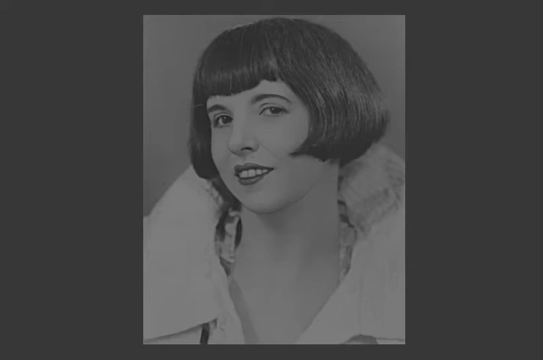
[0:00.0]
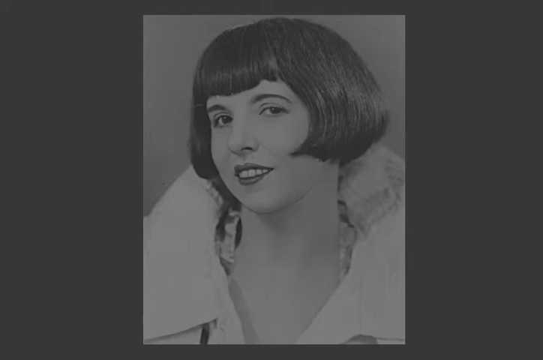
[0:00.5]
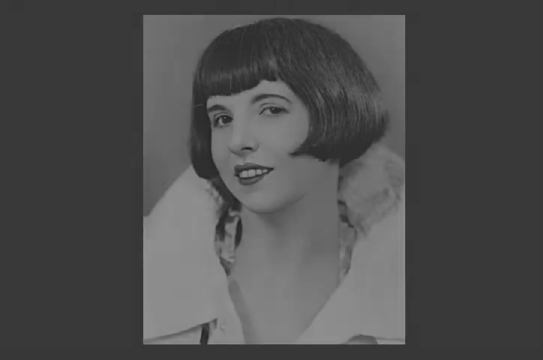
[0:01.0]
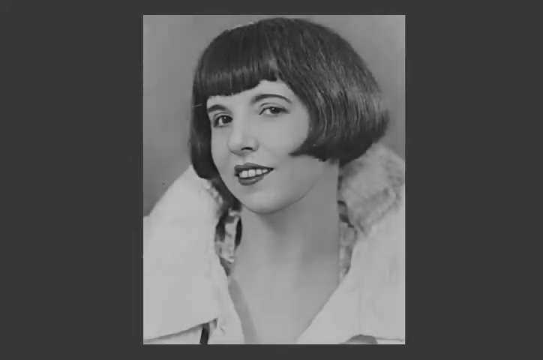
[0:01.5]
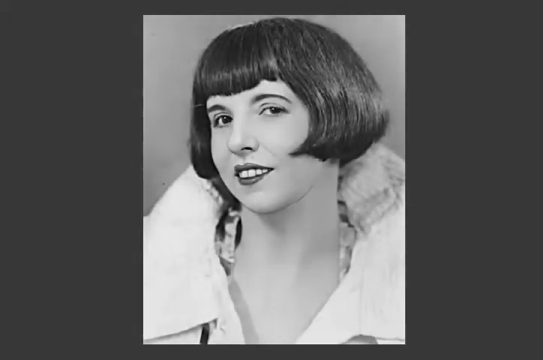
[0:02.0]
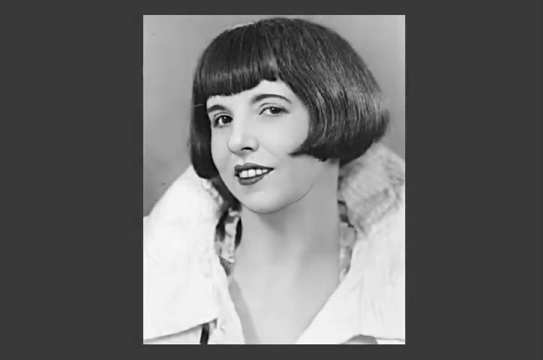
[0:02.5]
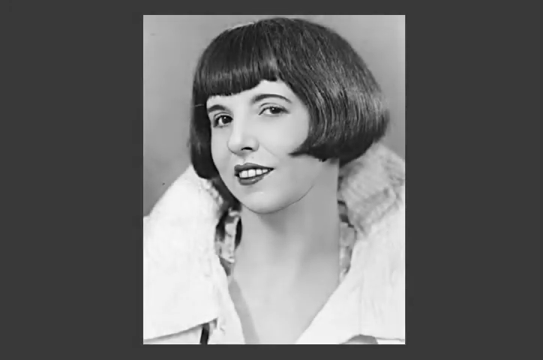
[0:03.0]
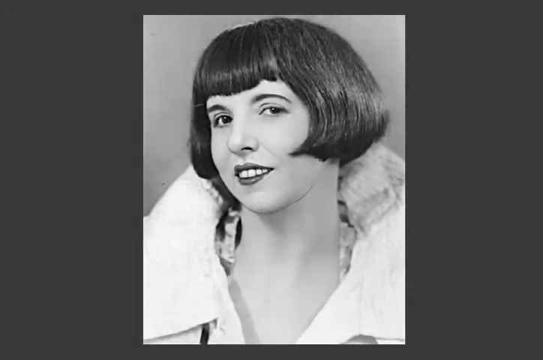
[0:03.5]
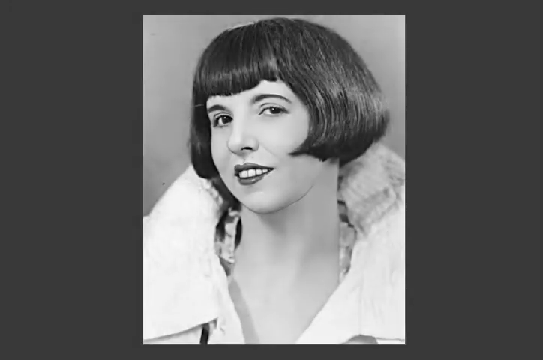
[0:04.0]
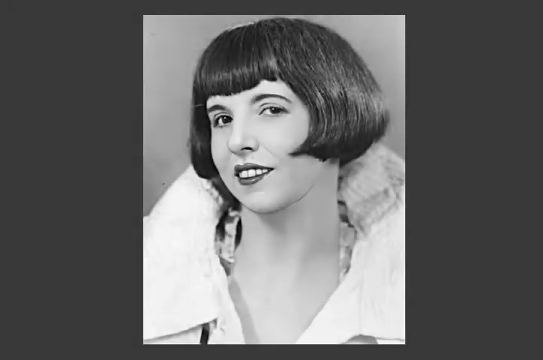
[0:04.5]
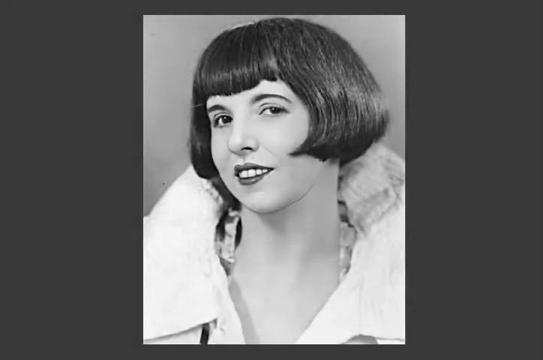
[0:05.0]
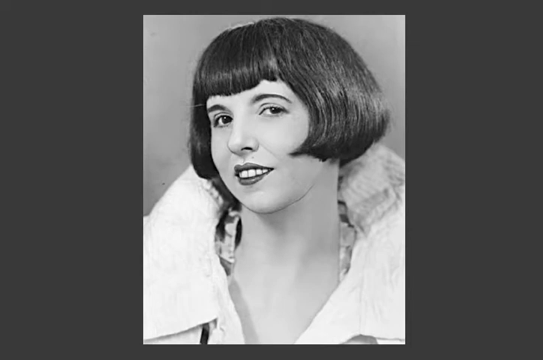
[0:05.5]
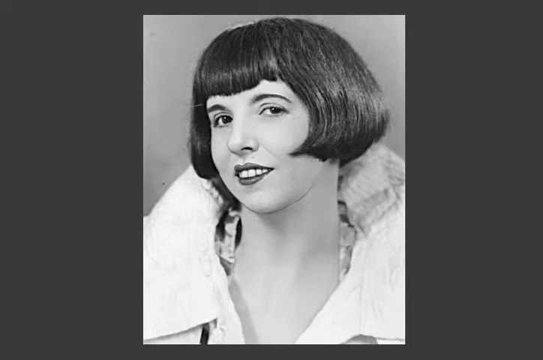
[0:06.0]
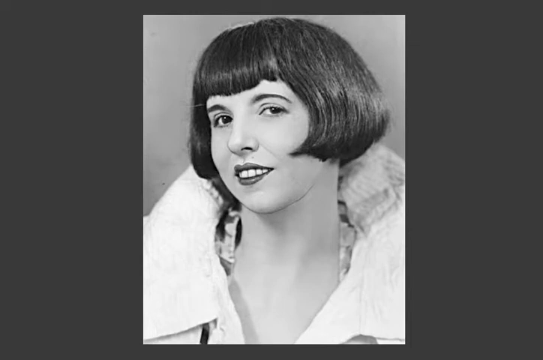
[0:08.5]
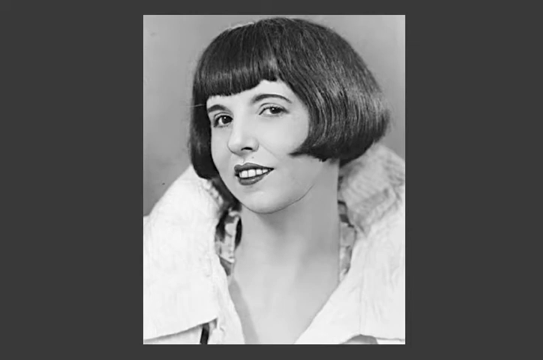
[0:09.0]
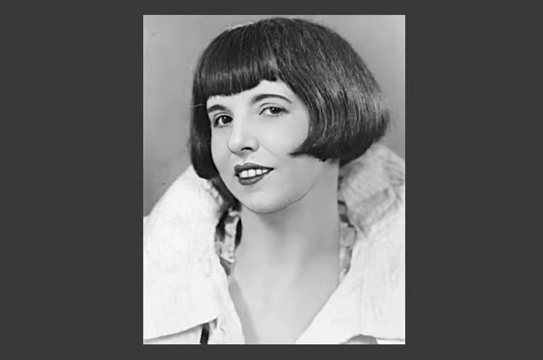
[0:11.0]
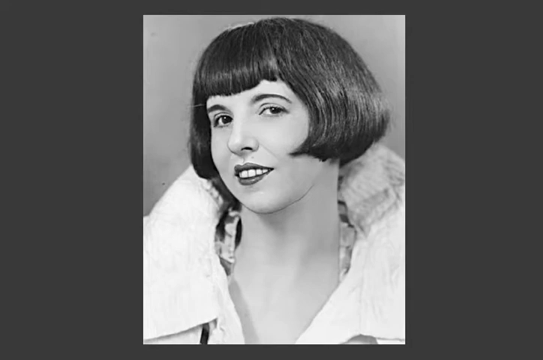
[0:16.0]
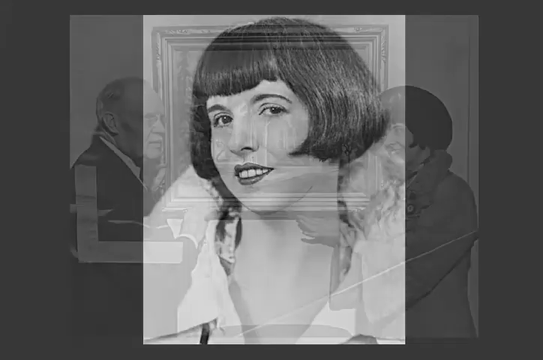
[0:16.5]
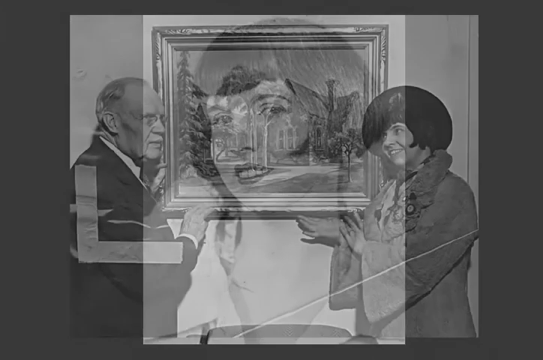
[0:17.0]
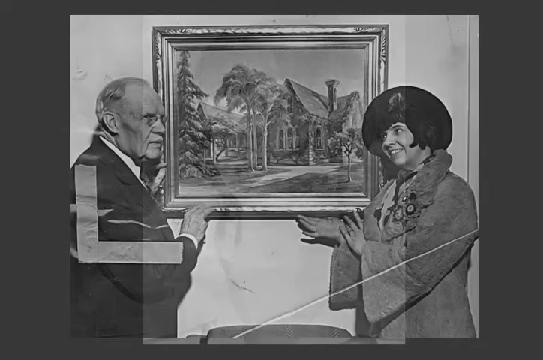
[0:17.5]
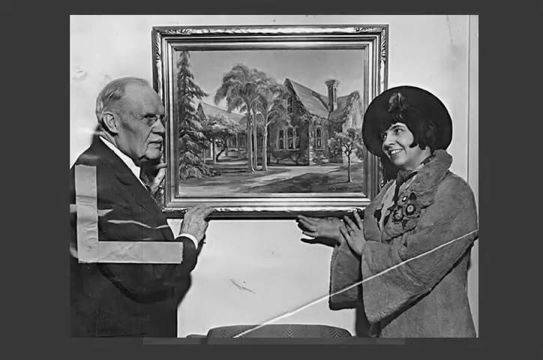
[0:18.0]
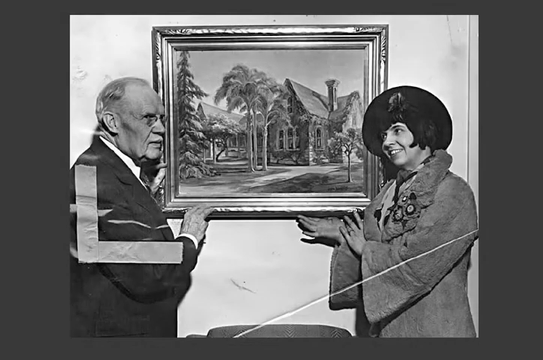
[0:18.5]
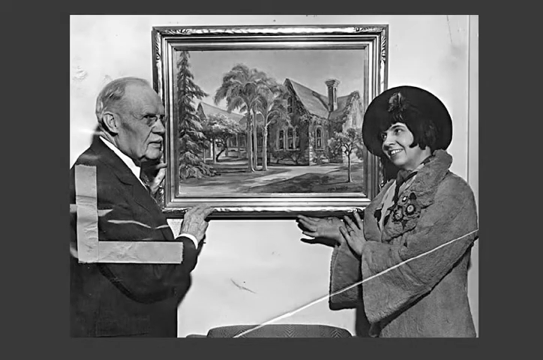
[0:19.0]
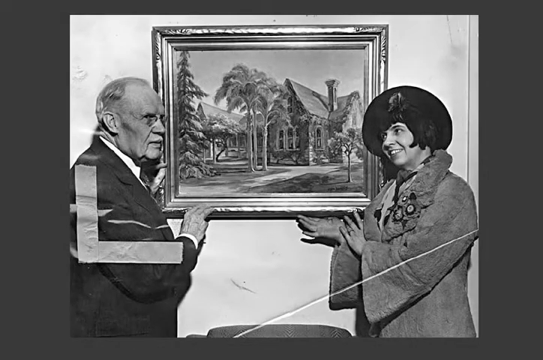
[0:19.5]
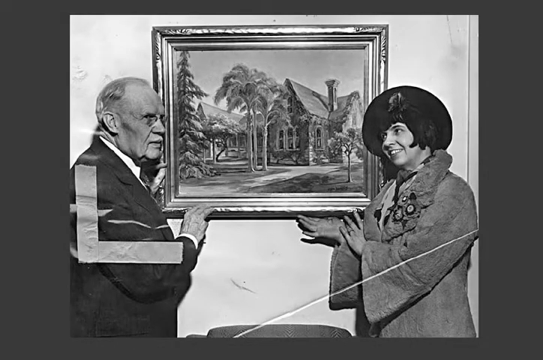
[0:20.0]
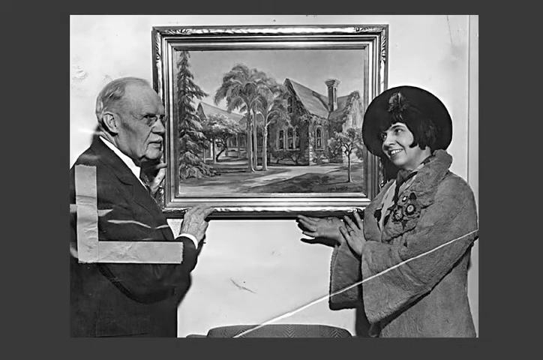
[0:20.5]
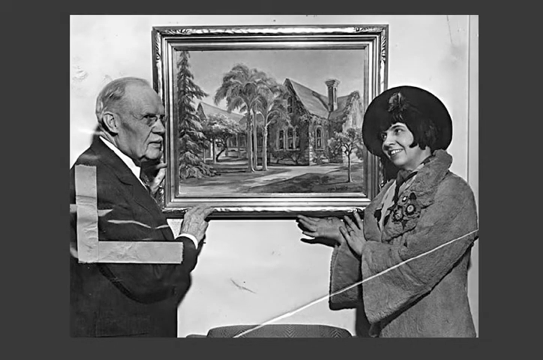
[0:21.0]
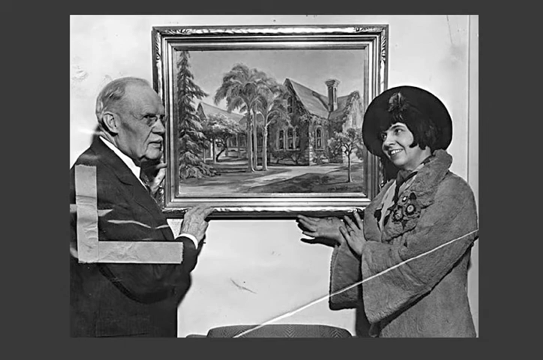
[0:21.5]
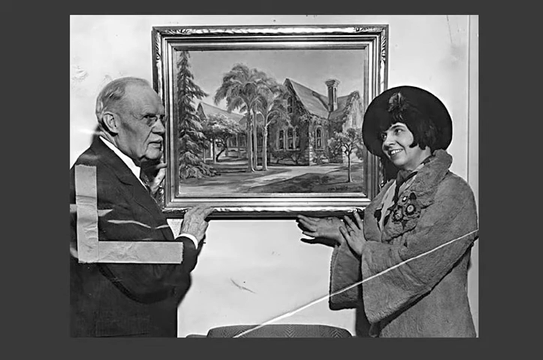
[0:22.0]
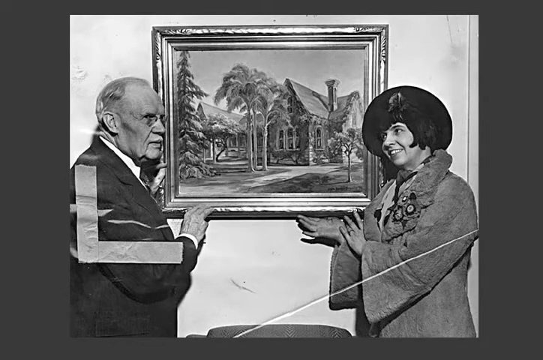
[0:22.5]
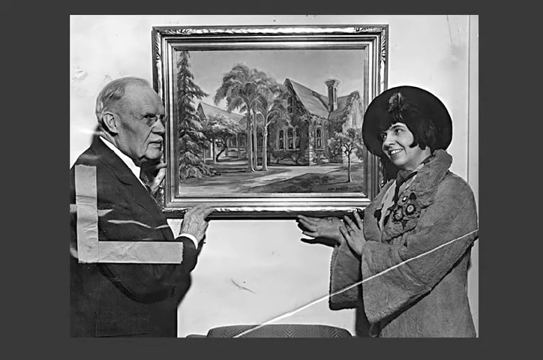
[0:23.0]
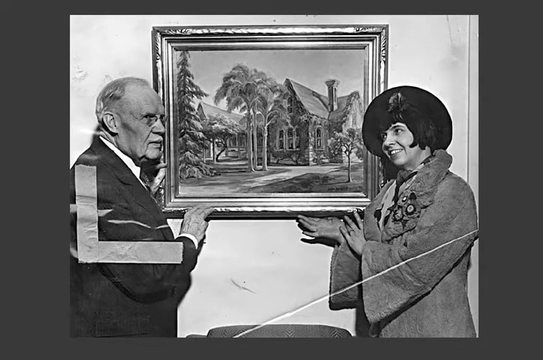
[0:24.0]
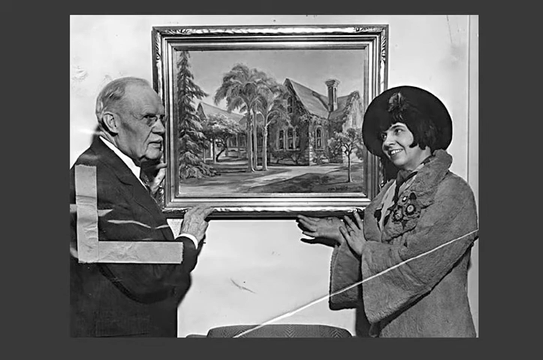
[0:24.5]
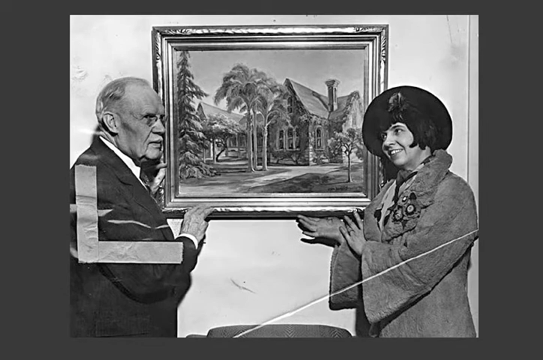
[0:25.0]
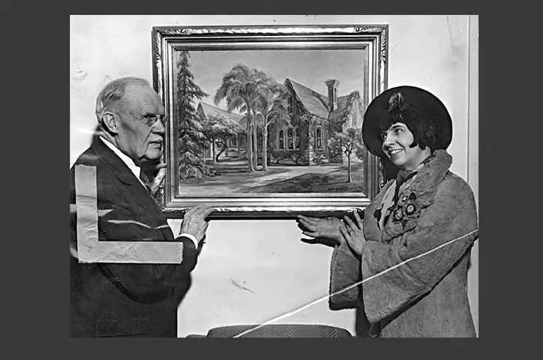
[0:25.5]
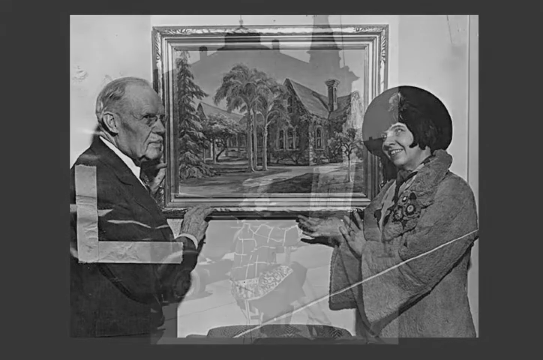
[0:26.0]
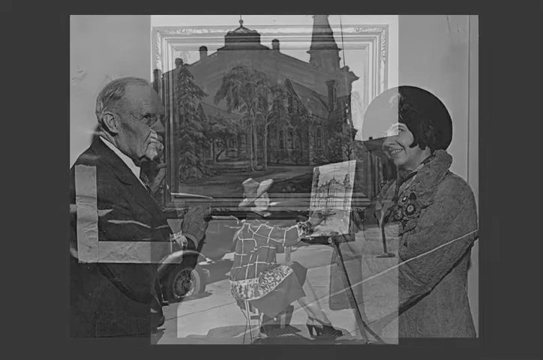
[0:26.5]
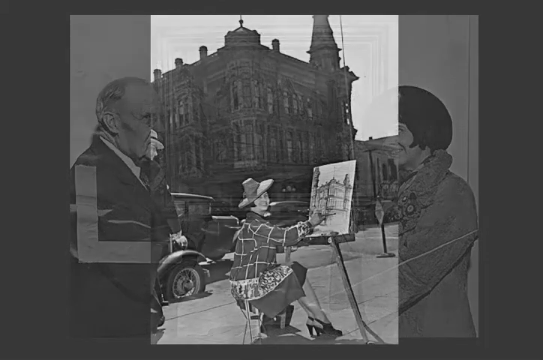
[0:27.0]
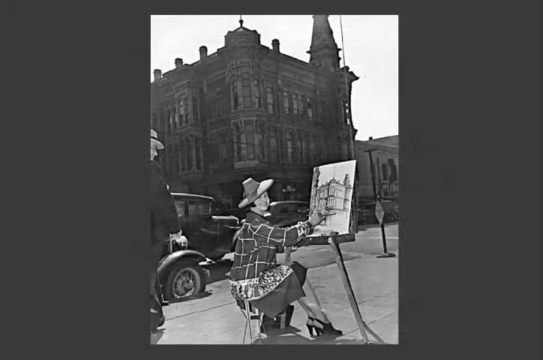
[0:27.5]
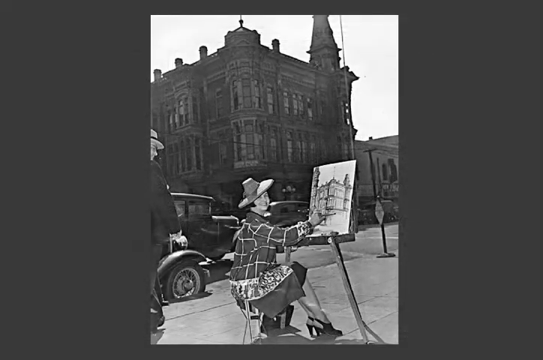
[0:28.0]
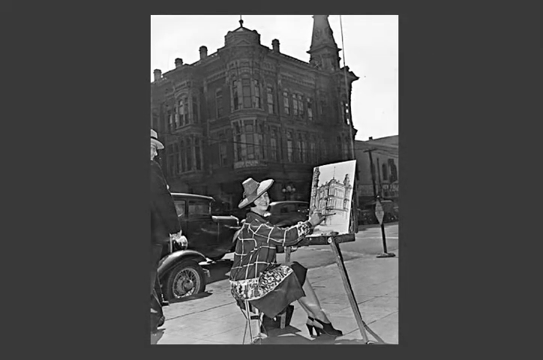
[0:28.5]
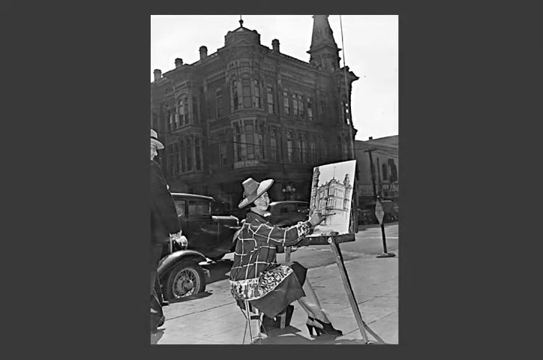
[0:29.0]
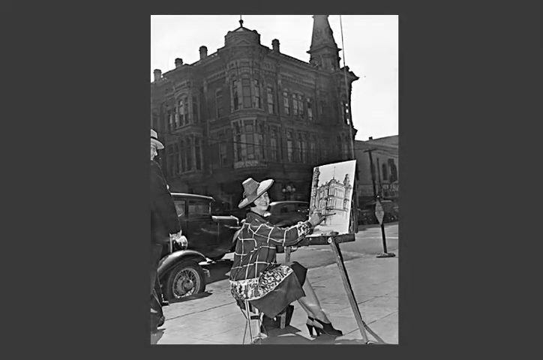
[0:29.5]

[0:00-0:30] Over a gray background appears a picture, from what looks like the 1930s, of a woman with bright red lipstick and a coy smile, looking three quarters of the way towards the camera. She seems to have a brown bobbed haircut above her chin and wears a giant white fancy coat with the collar coming up behind her neck. The image stays on this picture for quite a while, showing more details such as her bangs, cut at angles that were very fashion forward at the time. It then changes to a black and white picture of an older gentleman in a suit and bow tie on one side of a gold-framed picture of a house with trees in front of it, hanging on a white wall. On the right side of the same picture is a lady with a bobbed haircut smiling at her husband, in a black hat and a fur suit, holding the bottom of the frame. This is replaced with a picture of a lady sitting on the side of the street in a plaid jacket, hat and high heels, painting a picture of a cathedral that is seen across the street. In the background are Model Ts and an older type of landscape. All these pictures are in black and white.